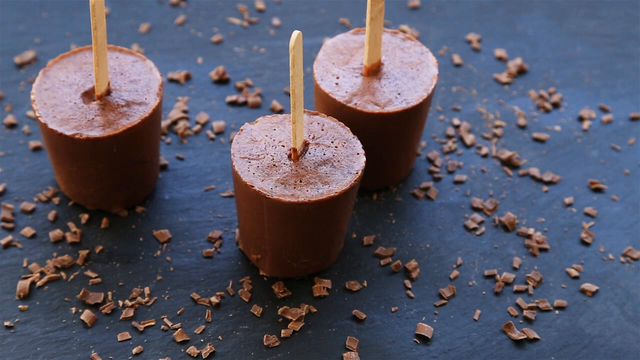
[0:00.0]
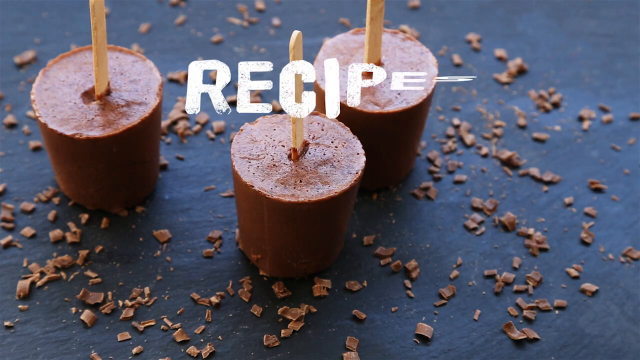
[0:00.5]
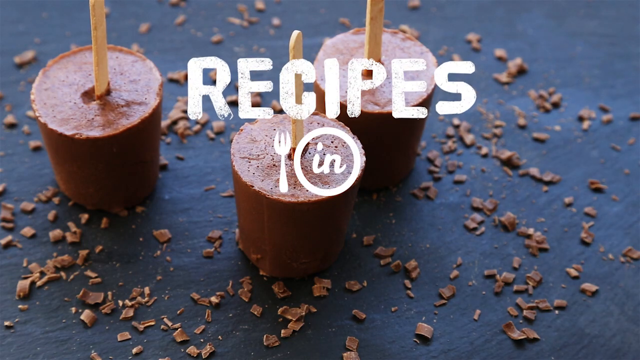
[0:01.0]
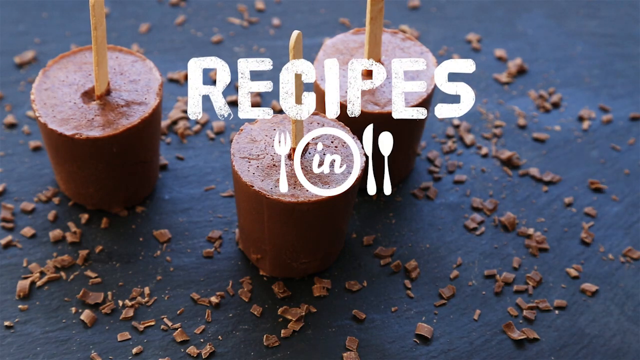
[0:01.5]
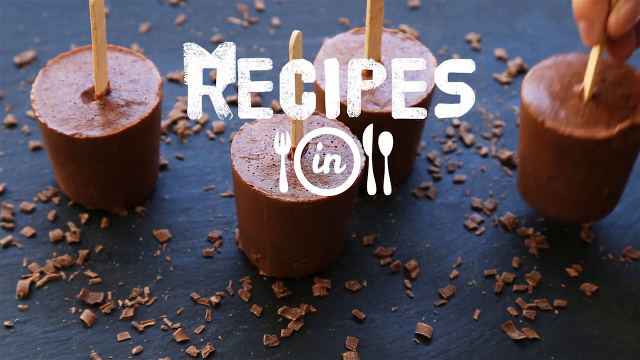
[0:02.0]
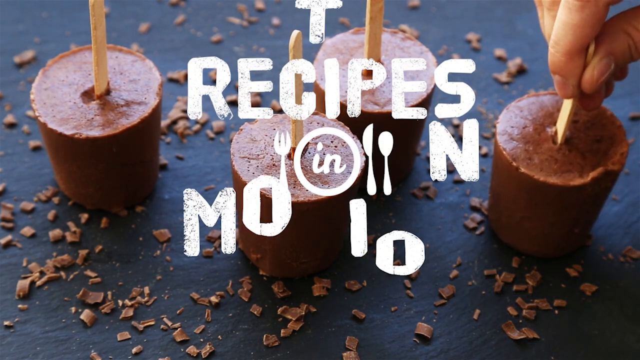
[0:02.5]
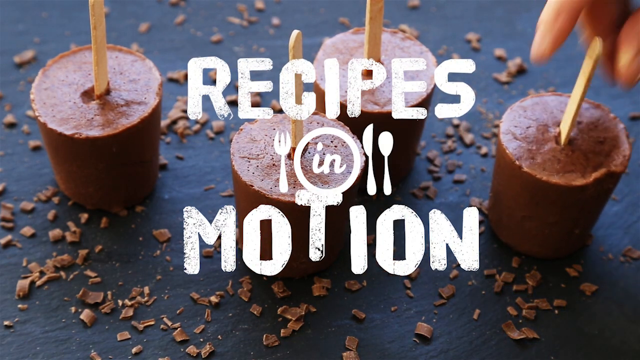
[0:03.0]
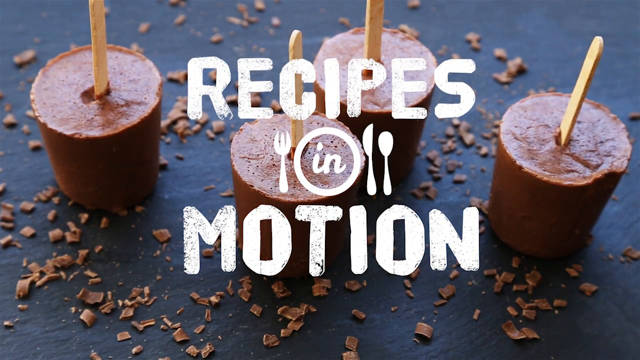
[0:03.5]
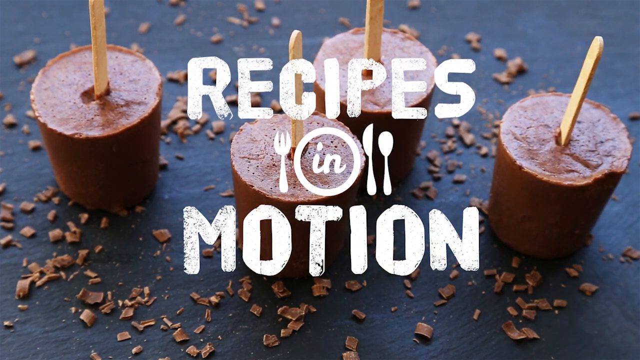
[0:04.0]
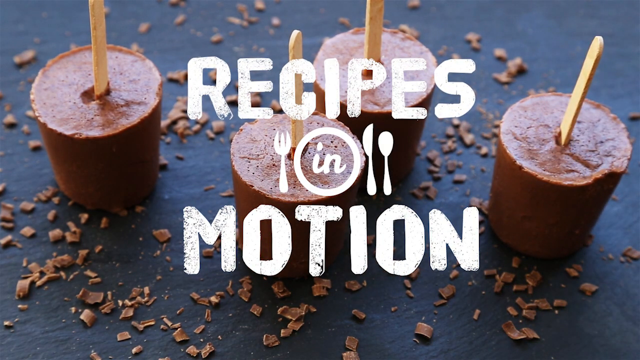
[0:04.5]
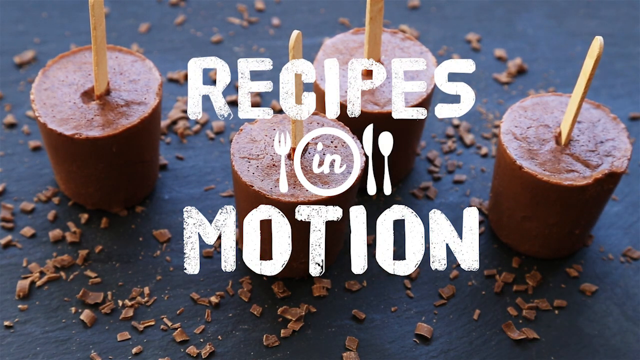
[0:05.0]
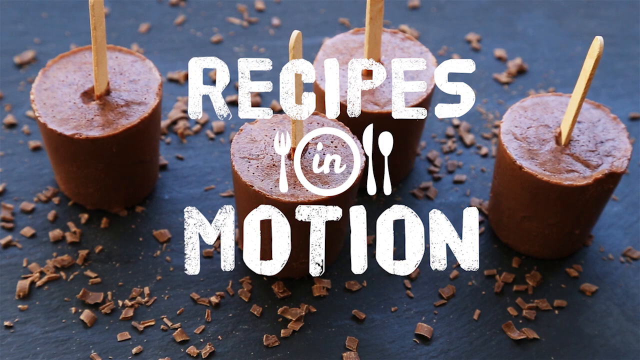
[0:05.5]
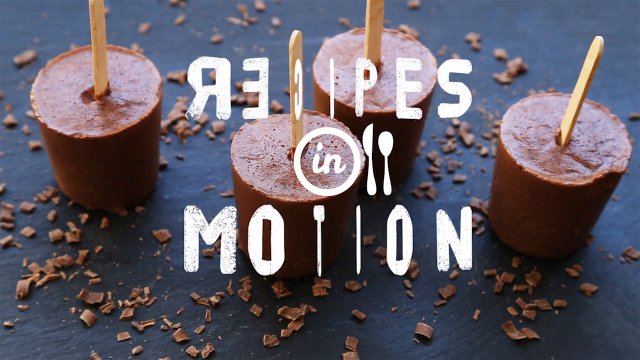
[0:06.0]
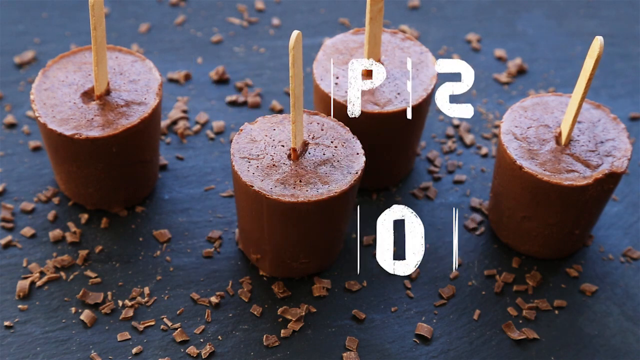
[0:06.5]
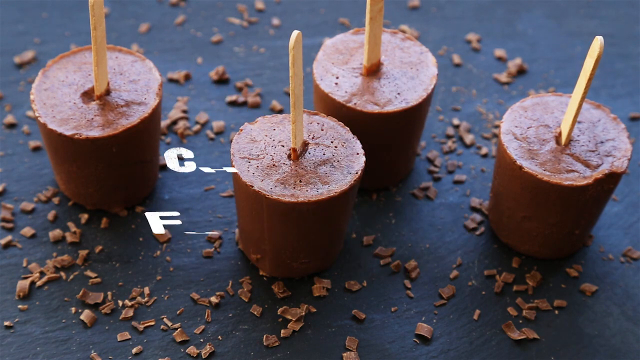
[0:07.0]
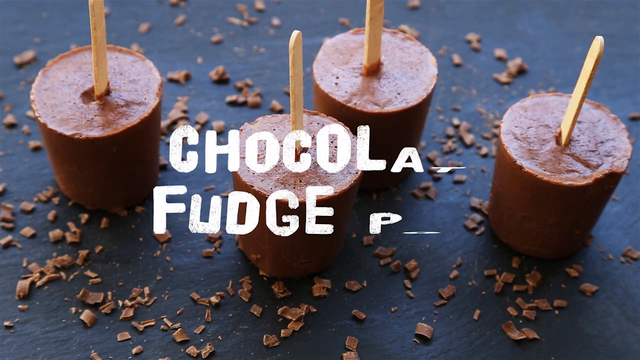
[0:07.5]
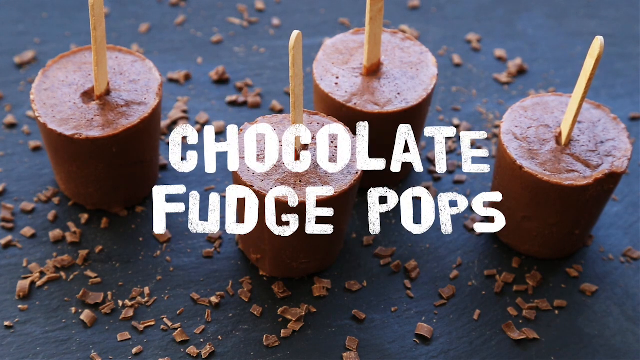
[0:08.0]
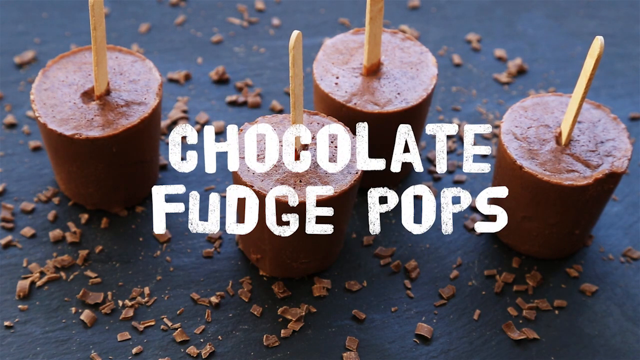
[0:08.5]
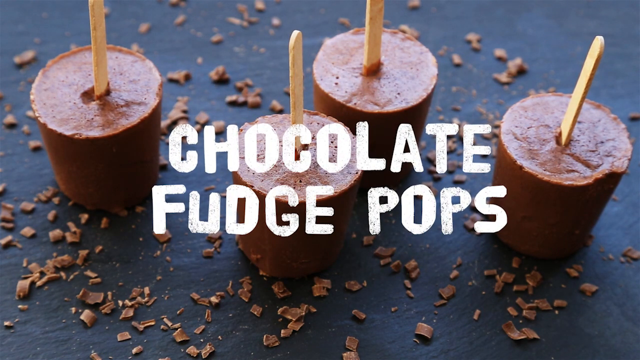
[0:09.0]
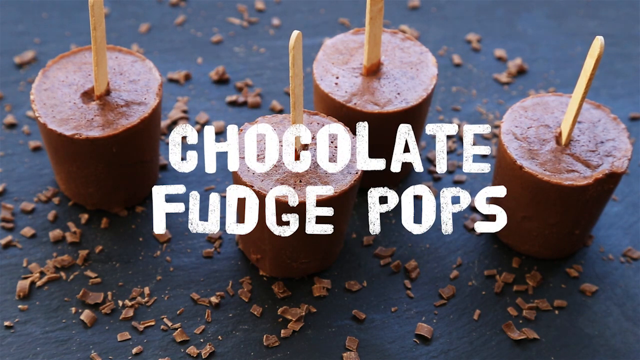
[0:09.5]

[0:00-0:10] Three brown popsicles, which look like they may be some kind of chocolate ice cream shaped into tiny cylinders, are on the left-hand side of the frame, with brown popsicle sticks coming out of them. There are chocolate flakes on the surface, which is also brown. Words appear at the top: "recipe", then "in", with a small image of a little white fork on the left and a knife and spoon on the right, and "motion" at the bottom. A hand comes in and puts another little popsicle on the right-hand side of the frame. Then the text "chocolate fudge pops" appears in white.